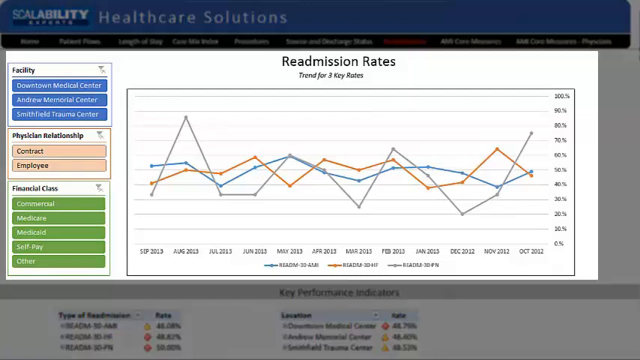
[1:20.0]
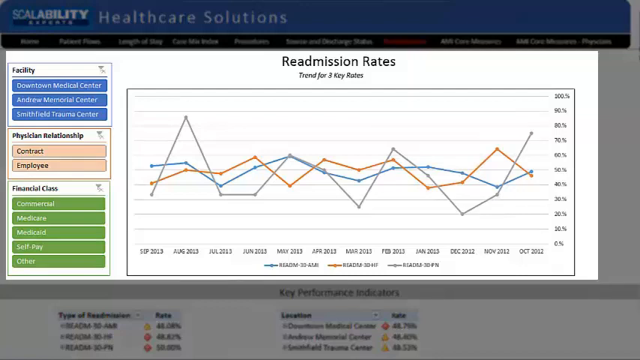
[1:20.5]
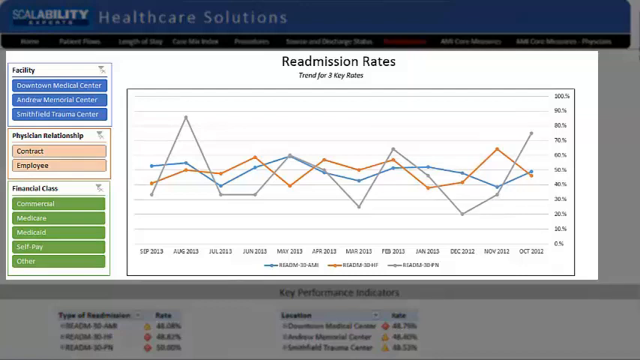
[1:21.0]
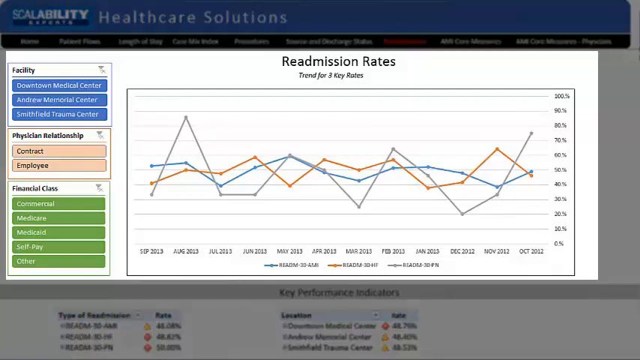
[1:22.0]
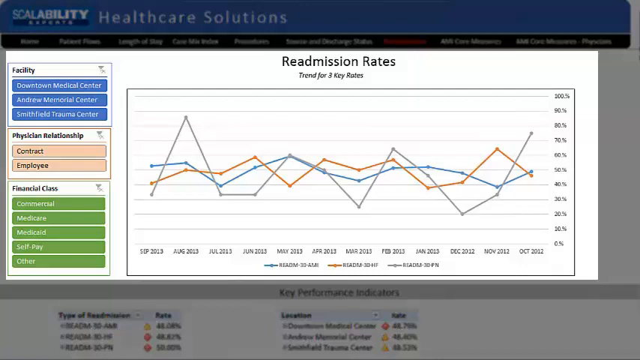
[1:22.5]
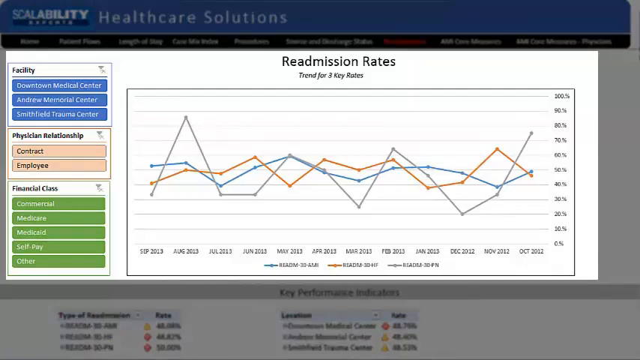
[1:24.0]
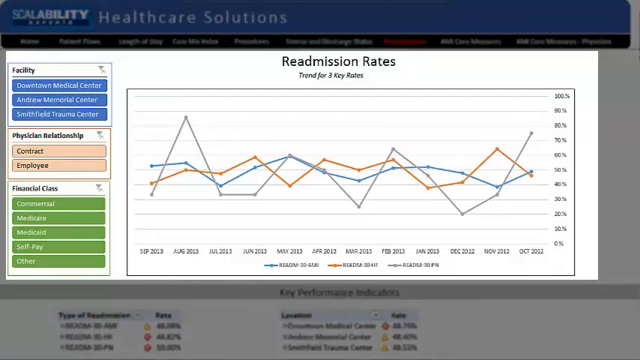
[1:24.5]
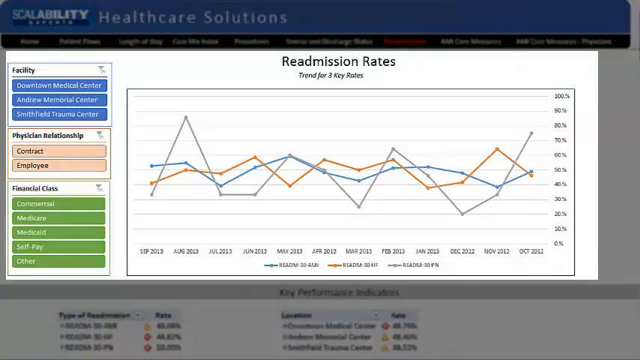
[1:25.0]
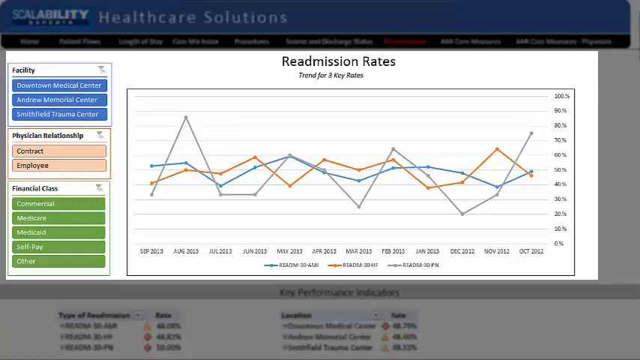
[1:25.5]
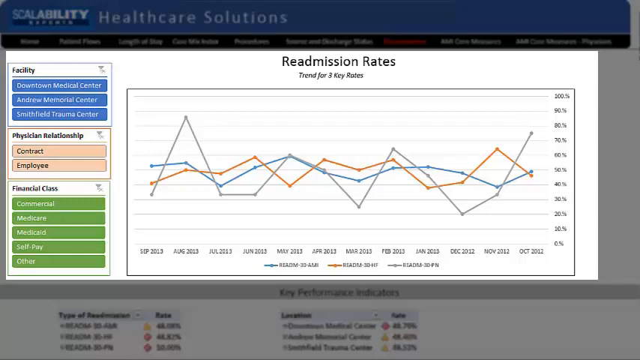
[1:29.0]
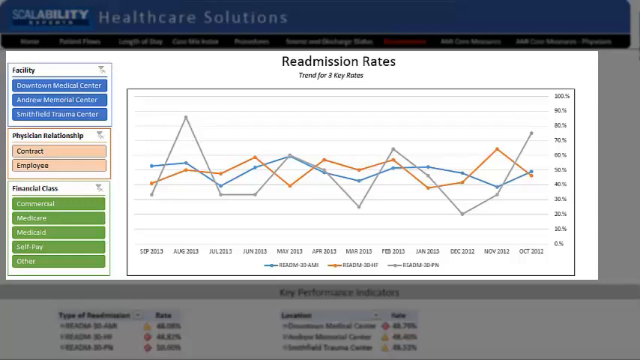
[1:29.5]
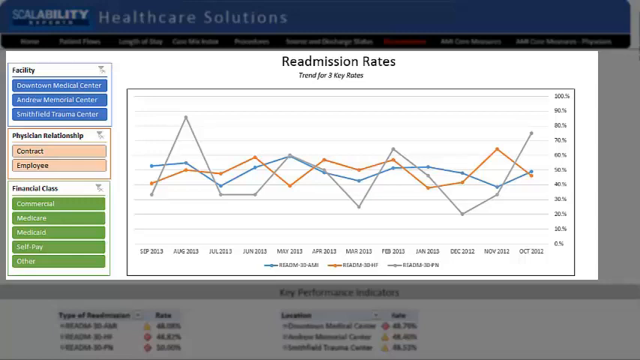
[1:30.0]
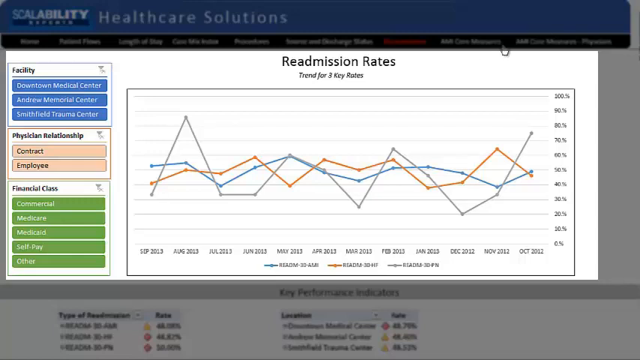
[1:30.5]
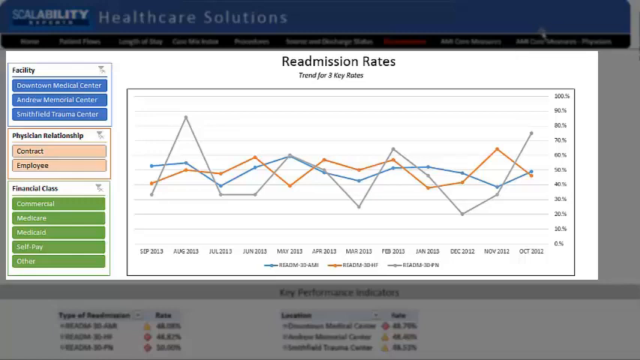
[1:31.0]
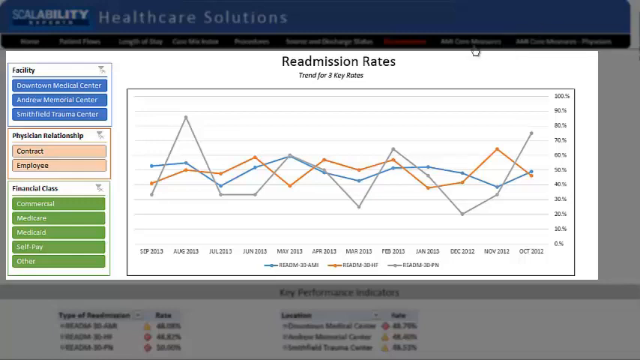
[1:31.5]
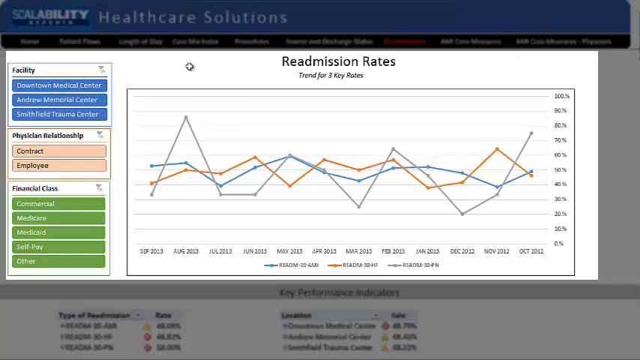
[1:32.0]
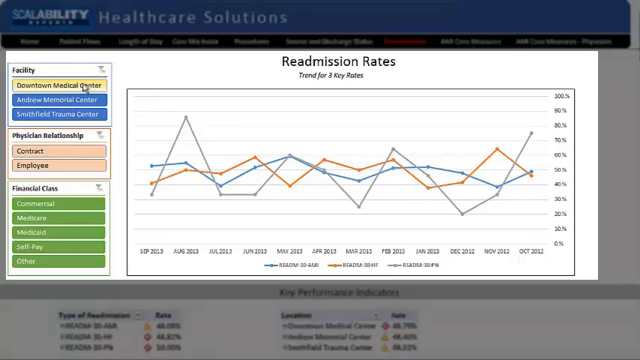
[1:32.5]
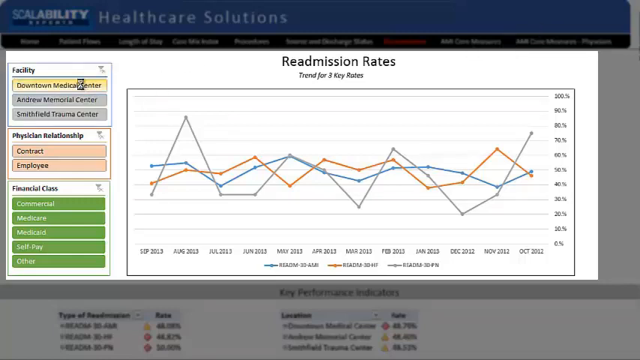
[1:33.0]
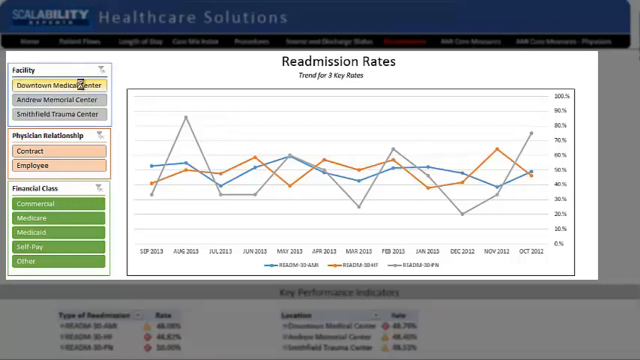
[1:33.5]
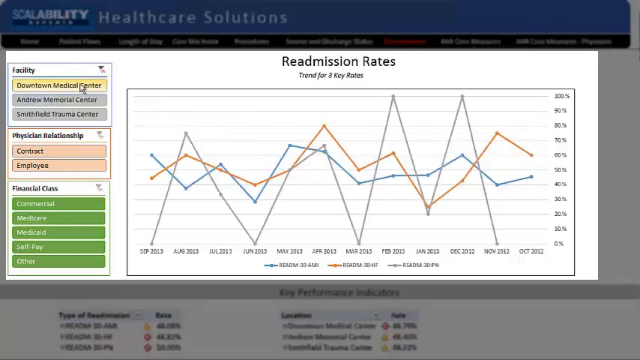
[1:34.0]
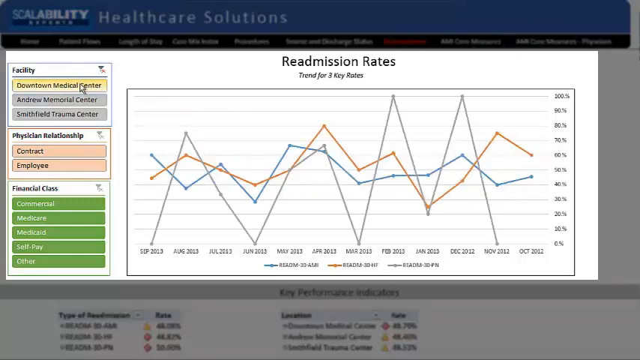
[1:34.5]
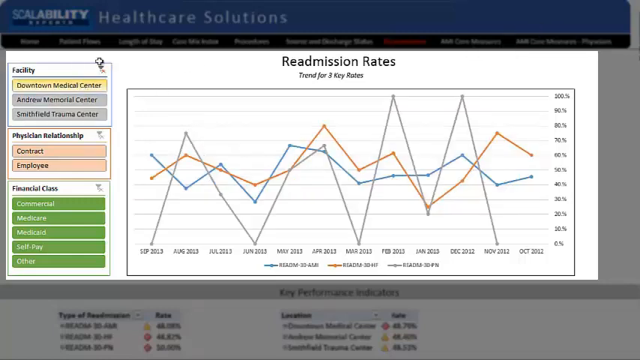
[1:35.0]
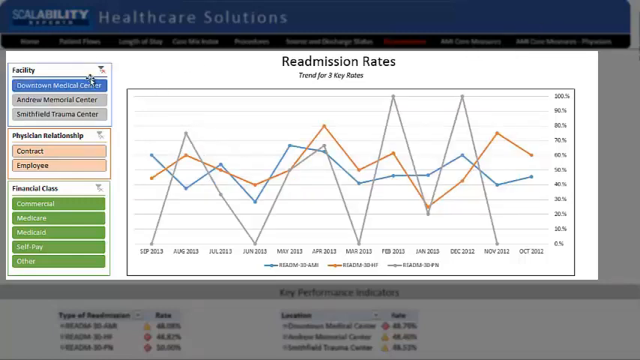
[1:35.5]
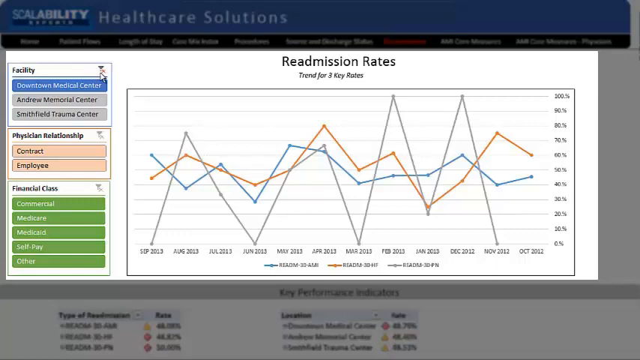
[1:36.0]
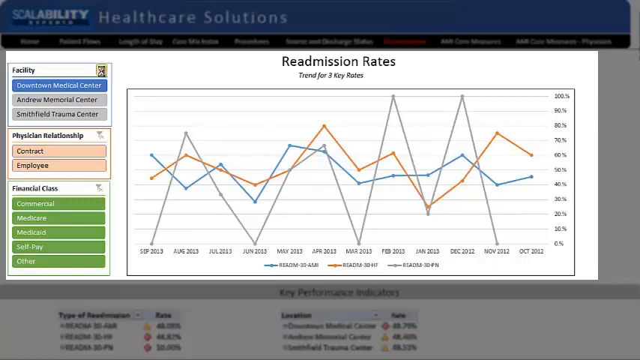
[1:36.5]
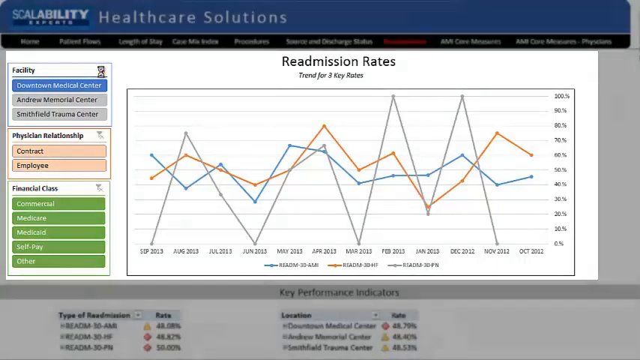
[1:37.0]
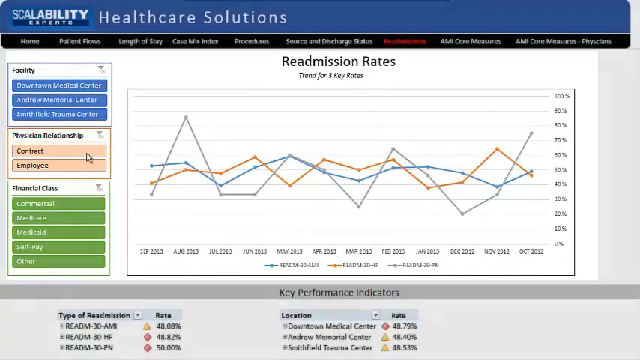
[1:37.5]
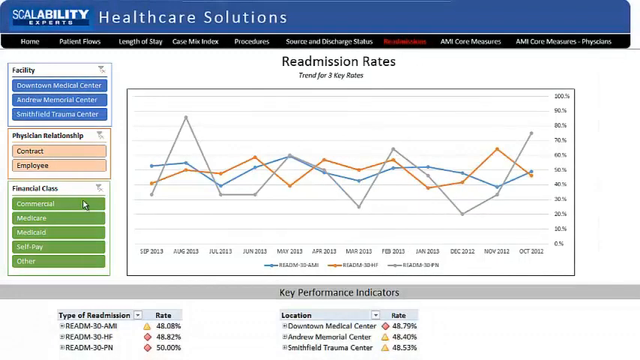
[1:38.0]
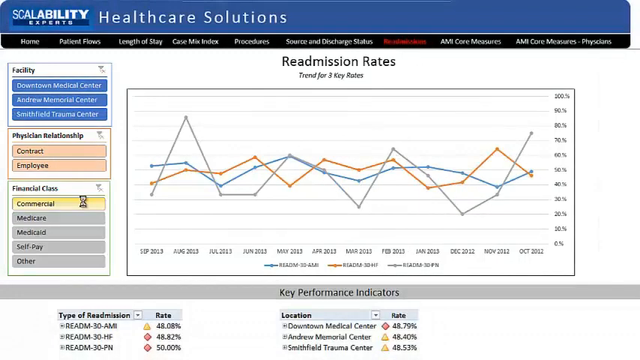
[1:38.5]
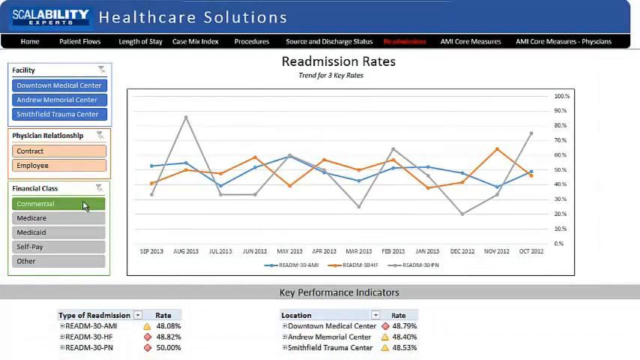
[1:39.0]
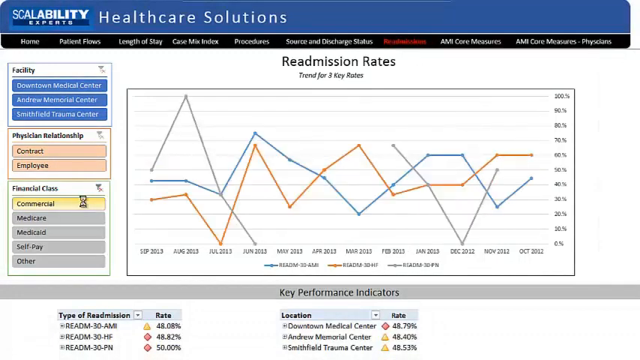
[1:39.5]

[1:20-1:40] Text reads "readmission rates trend for three key rates" above a graph with lines in gray, blue, and orange and dates from September 2013 to October 2012. Information on the left shows "faculty," "downtown medical center," "Andrew Memorial Center," "Smithfield Trauma Center," "physician relationship," "contract," "employee," "financial class," "commercial," "Medicare," "Medicaid," "self-pay," and "other." Key performance indicators underneath appear somewhat blurred out, as do additional settings at the top. The mouse pointer comes onto the screen and moves around the page, clicks on downtown medical center, and the graph appears to change based on that selection. The user then clicks a small box next to faculty, and the setting bar seems to return to its original colors. Next the user clicks on commercial under financial class, which loads different graph information.